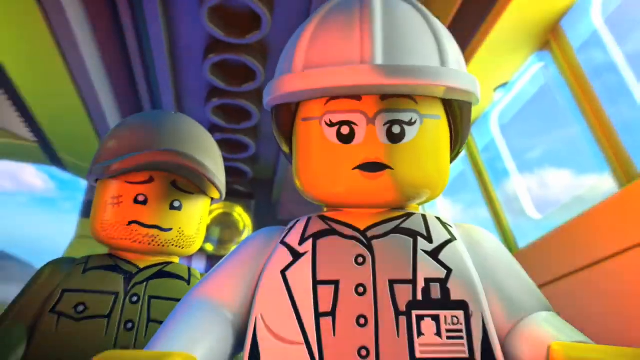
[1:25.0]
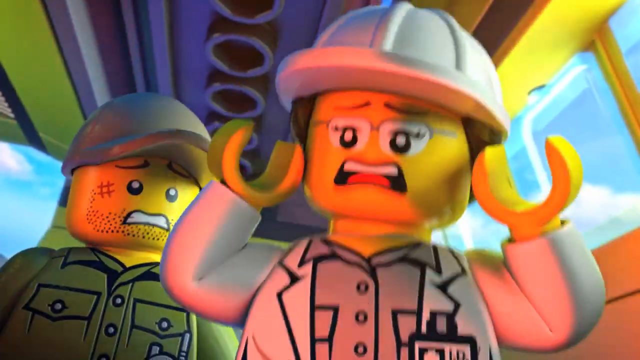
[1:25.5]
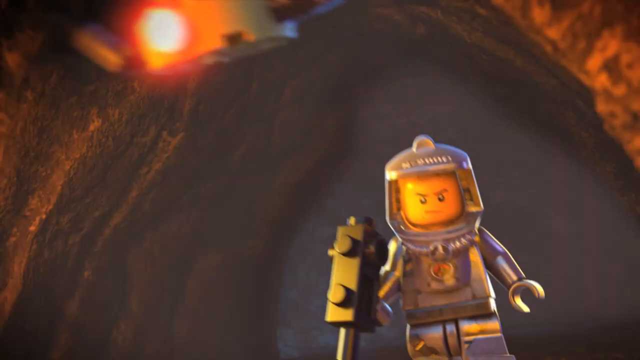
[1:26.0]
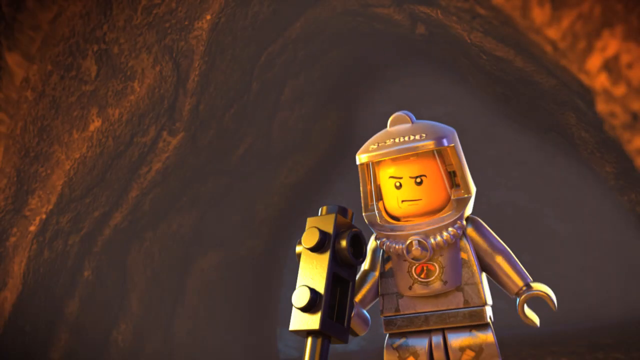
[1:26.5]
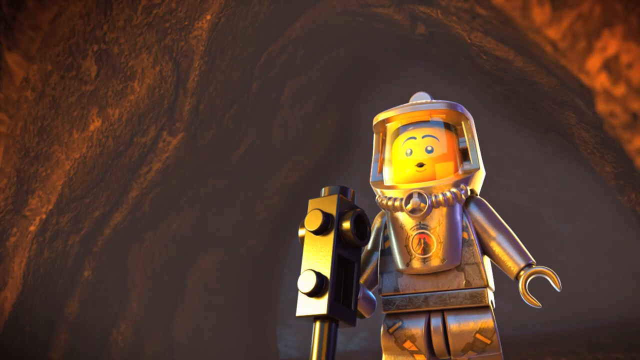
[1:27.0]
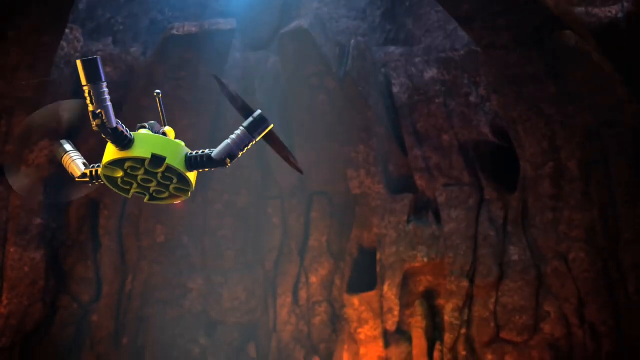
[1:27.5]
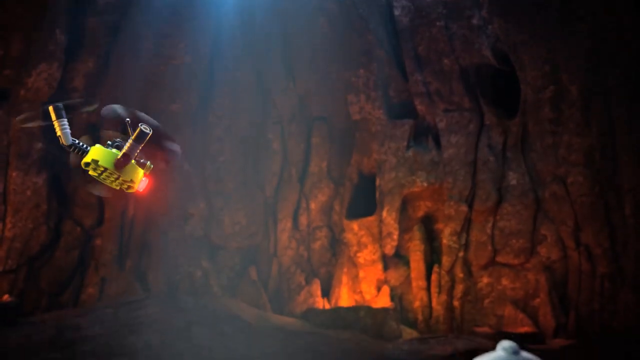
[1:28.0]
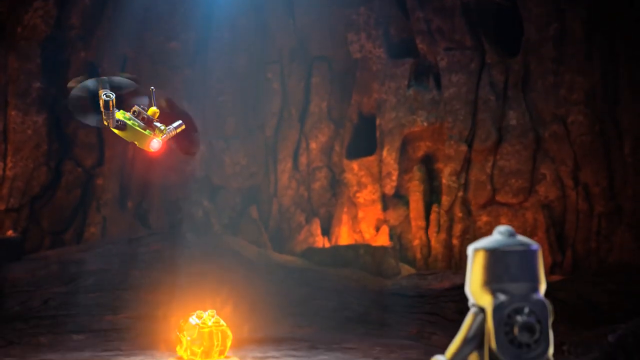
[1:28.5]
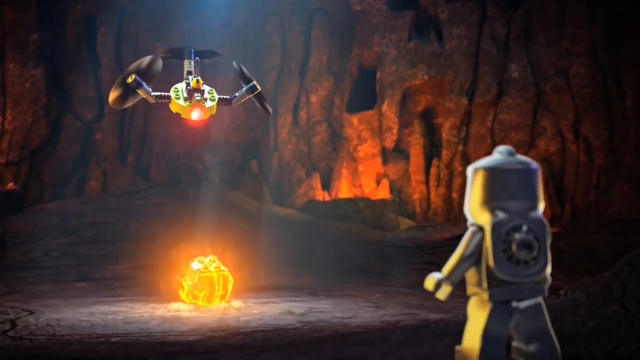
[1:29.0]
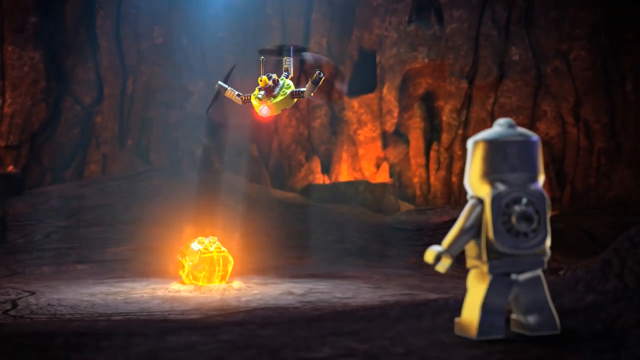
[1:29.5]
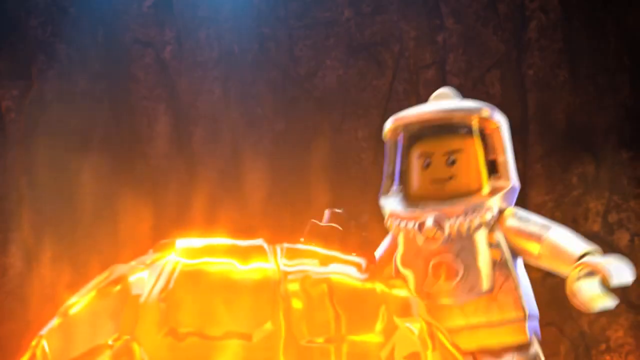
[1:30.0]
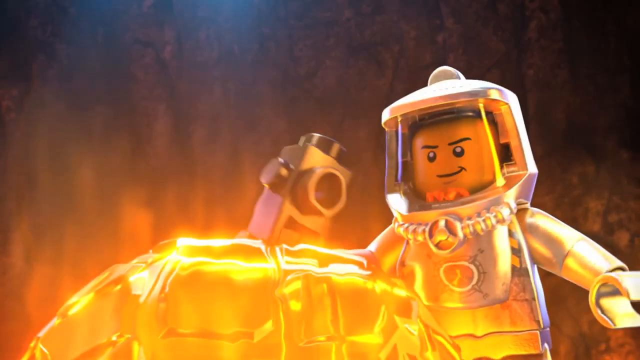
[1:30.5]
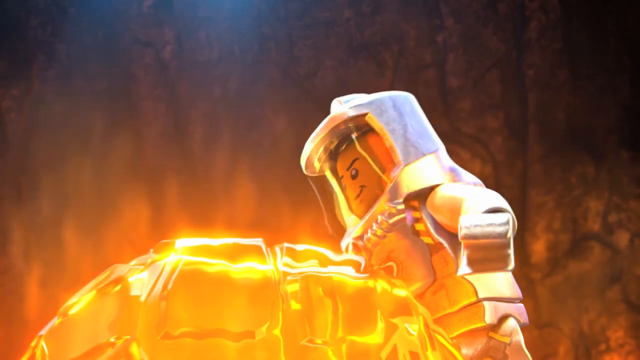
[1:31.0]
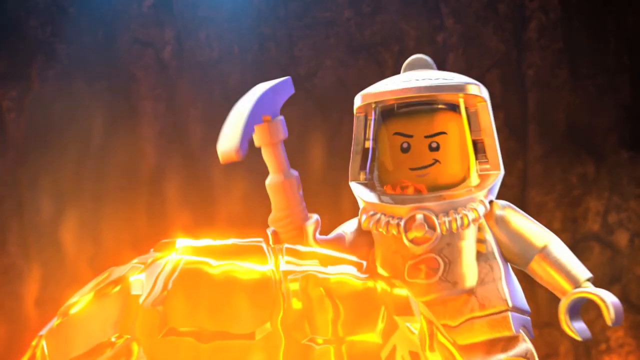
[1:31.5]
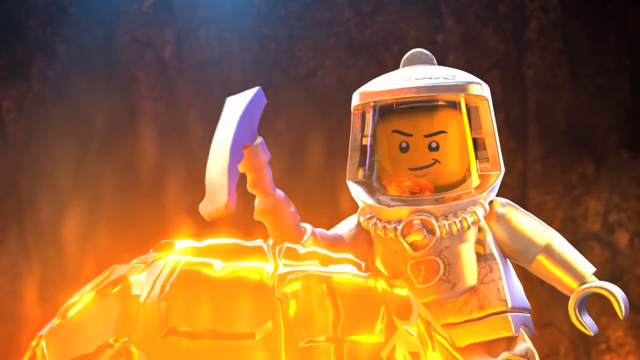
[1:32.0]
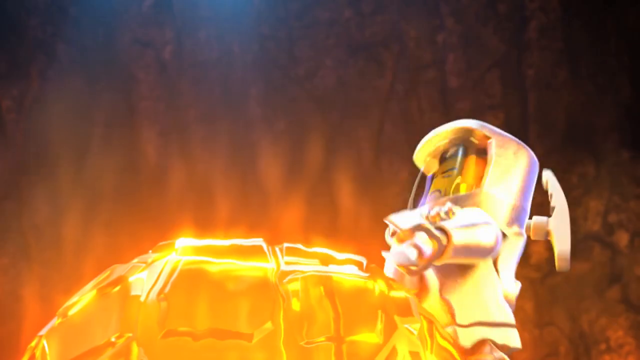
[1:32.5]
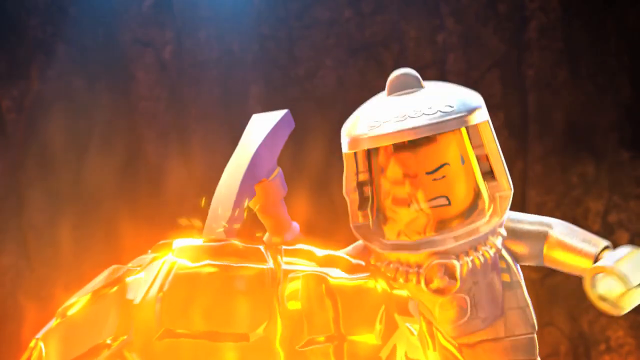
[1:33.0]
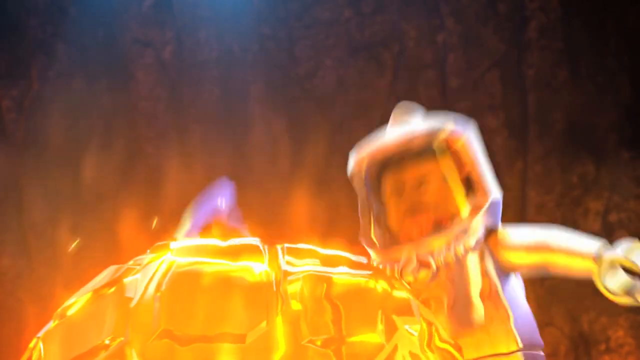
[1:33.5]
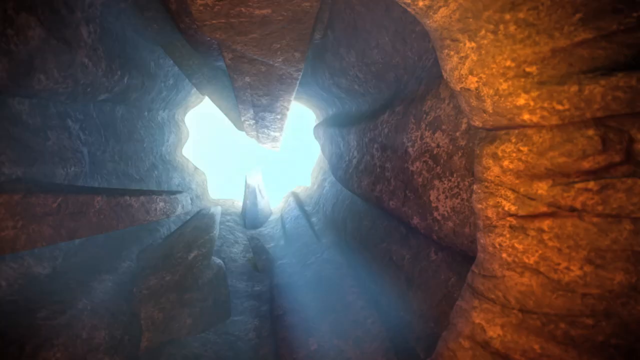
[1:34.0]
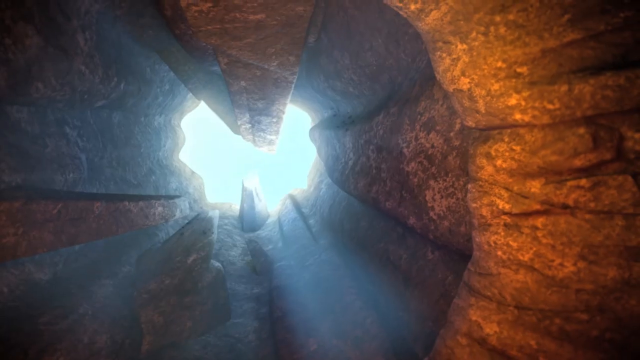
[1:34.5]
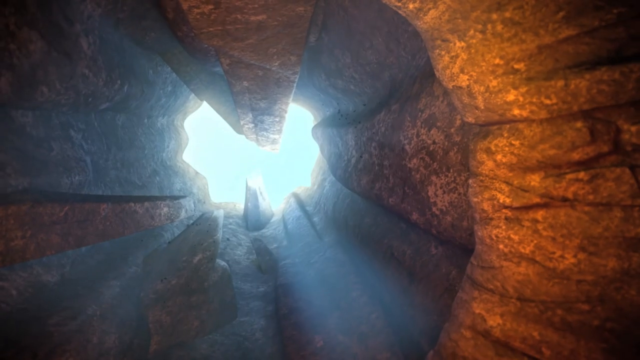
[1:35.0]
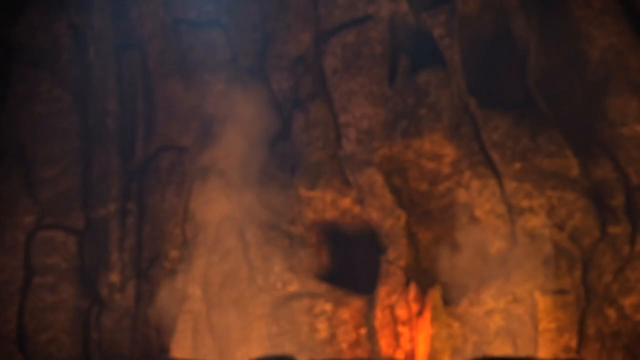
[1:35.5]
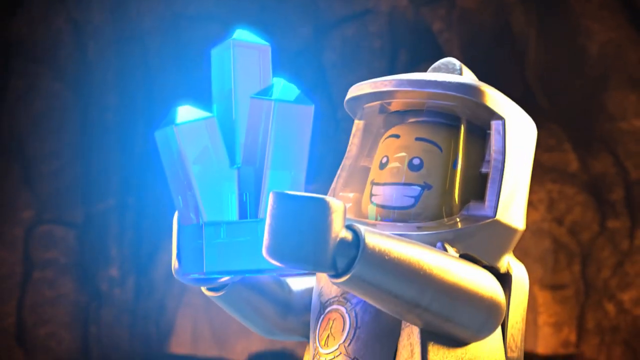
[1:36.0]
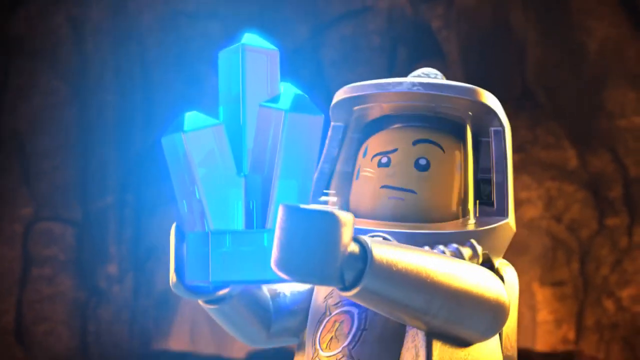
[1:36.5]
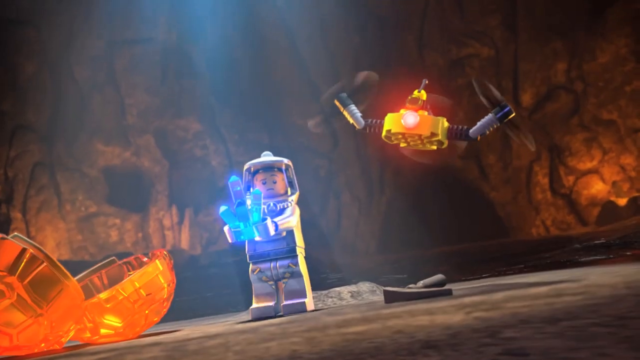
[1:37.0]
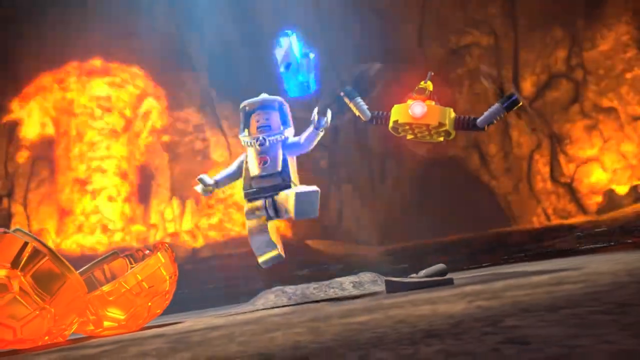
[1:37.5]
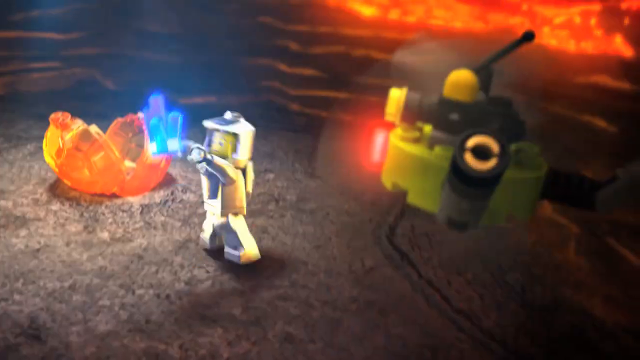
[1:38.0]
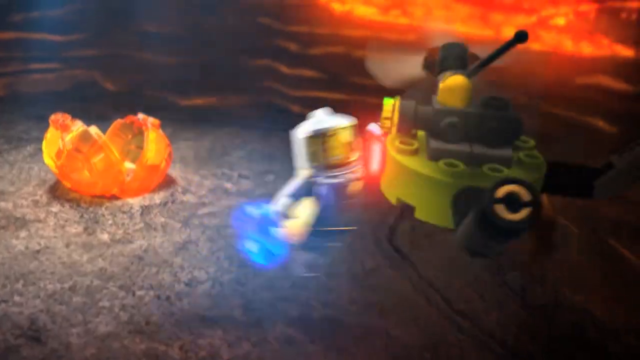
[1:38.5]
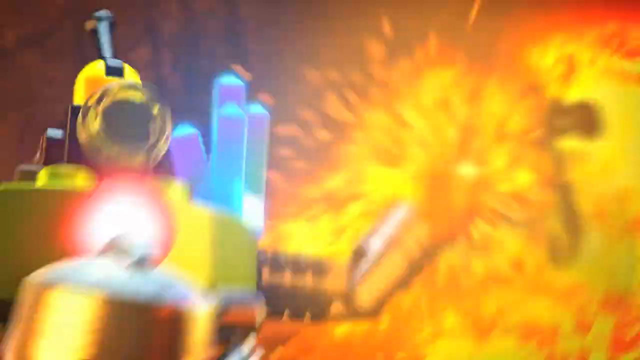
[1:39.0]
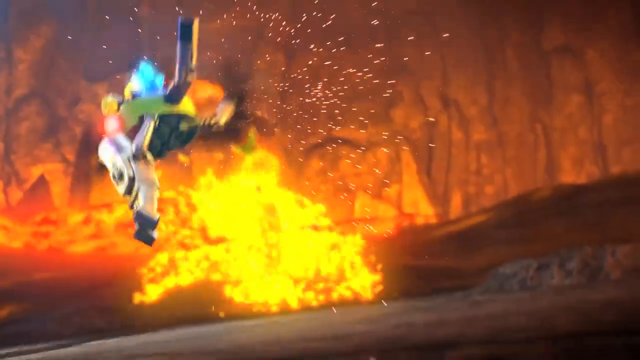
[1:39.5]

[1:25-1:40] The scientists inside the command center are very frightened and excited about something. The scene cuts to the little Lego man walking inside the cave or the volcano, and a drone flies in above him and circles around another large orb that has a blue crystal inside it. The Lego man takes a hammer and smashes the orb, revealing the blue crystals inside. He is very excited. Then an explosion happens on the other side of him, he tosses the blue crystals up into the air, and he grabs a lift from the drone, which appears to lift him up as they try to escape.